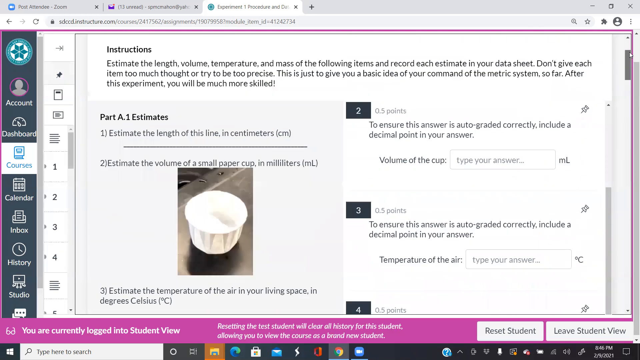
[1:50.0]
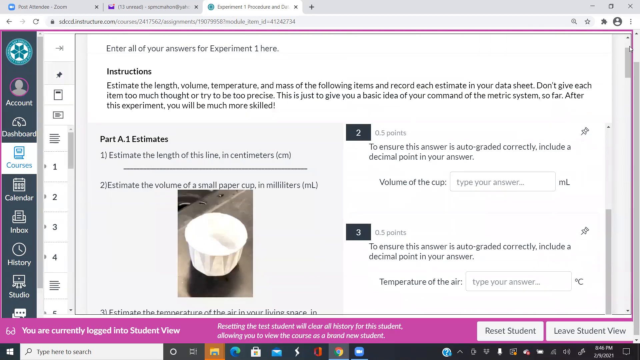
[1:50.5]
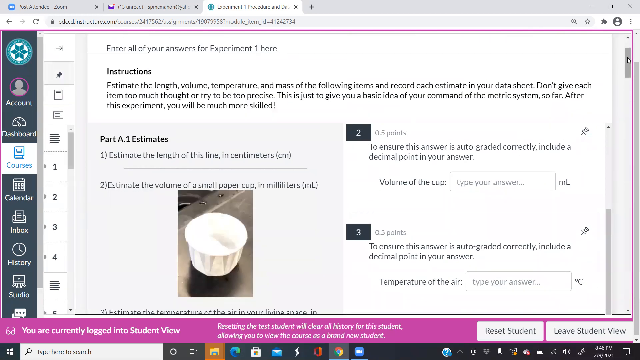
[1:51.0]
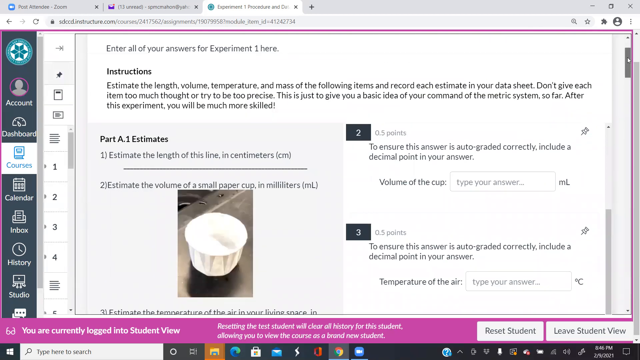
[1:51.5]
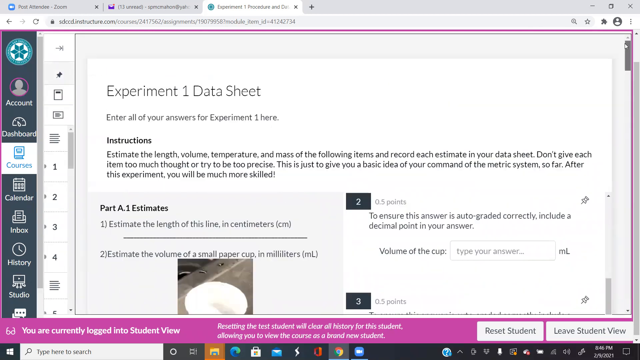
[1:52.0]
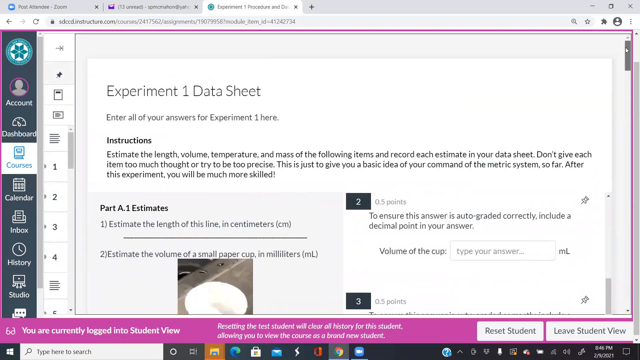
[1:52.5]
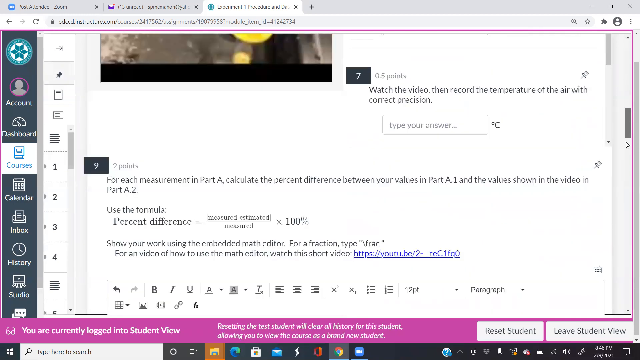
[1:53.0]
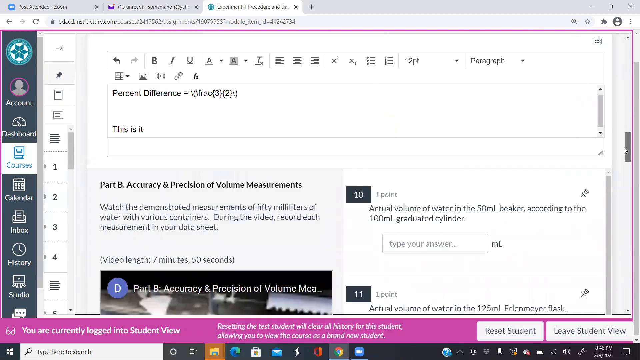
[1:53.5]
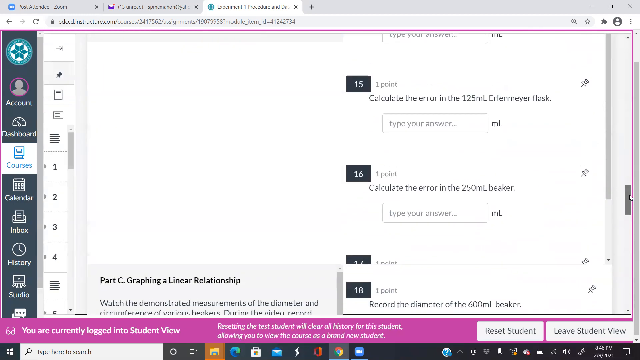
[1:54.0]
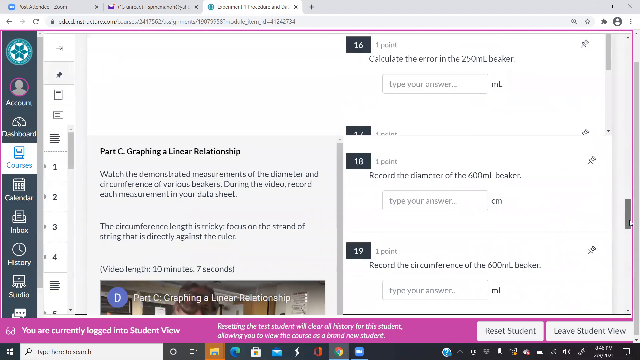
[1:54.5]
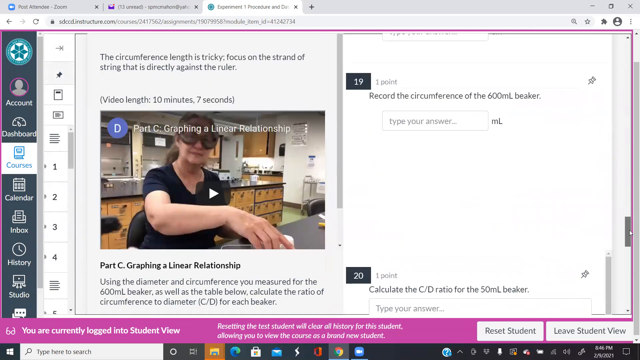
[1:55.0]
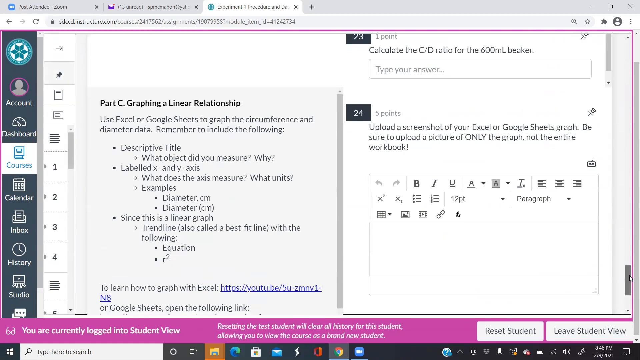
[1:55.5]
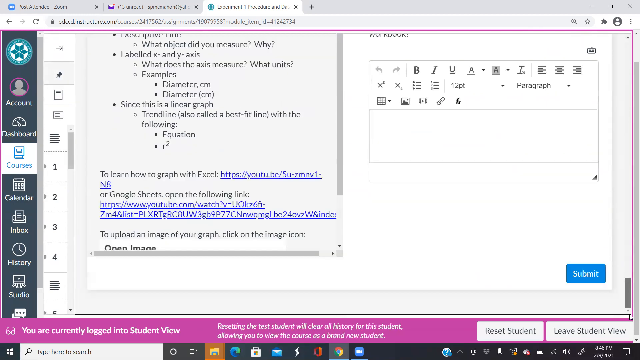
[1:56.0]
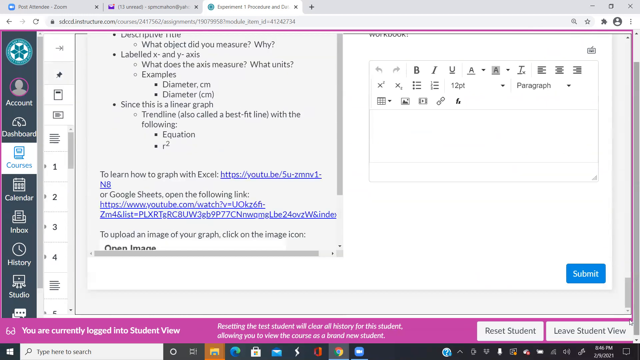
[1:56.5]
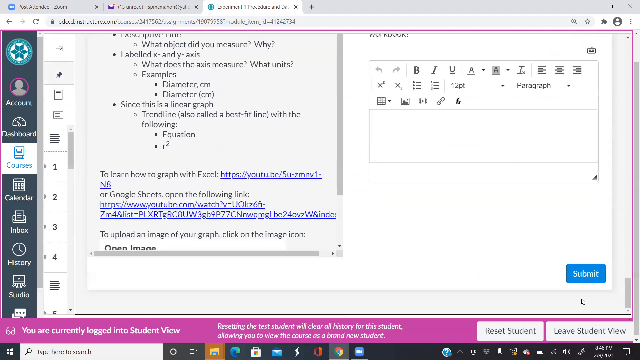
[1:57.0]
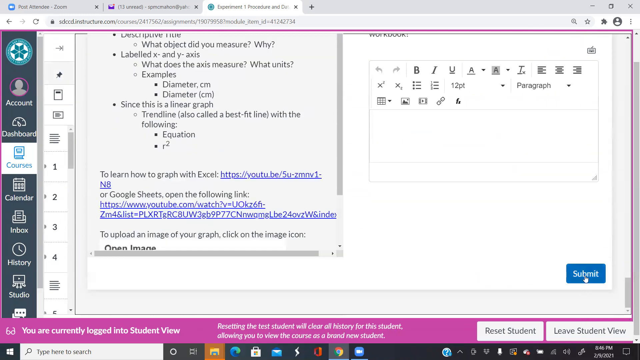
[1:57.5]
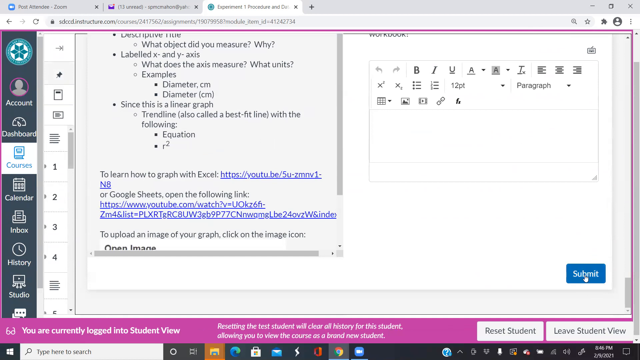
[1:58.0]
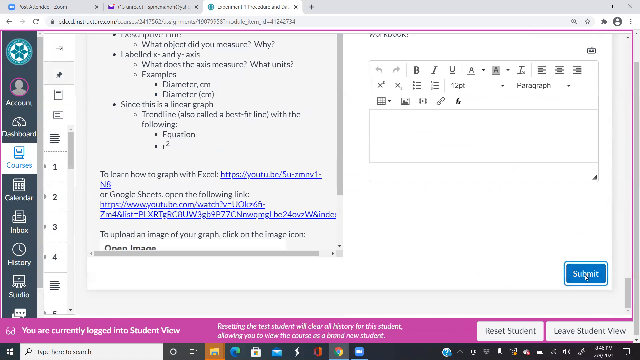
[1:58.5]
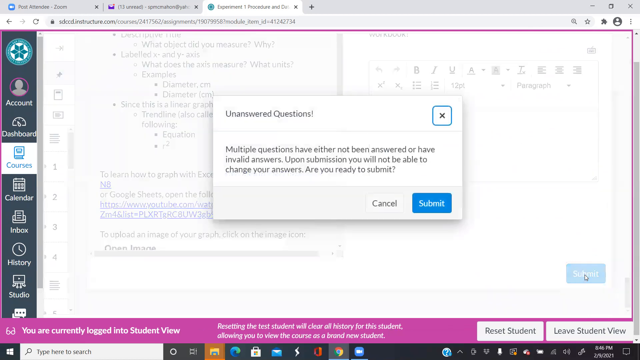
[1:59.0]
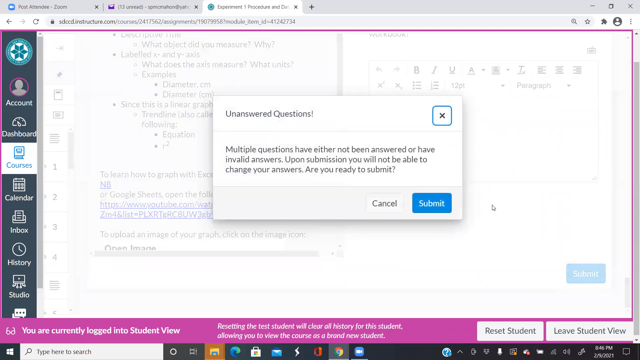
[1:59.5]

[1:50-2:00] A data sheet for experiment 1 gives instructions on the first part of the experiment, estimates. The screen is divided in two: questions about the estimates on the left and the space for typing answers on the right. The student scrolls down to a question about percent difference and clicks on the space provided to answer. They type a fraction as the answer using the MathQuill toolbar and also type "this is it". They then go back to the assignment, scroll up with the mouse, the arrow moving up and down, and scroll back down. Other questions are visible, but they do not answer them and click submit.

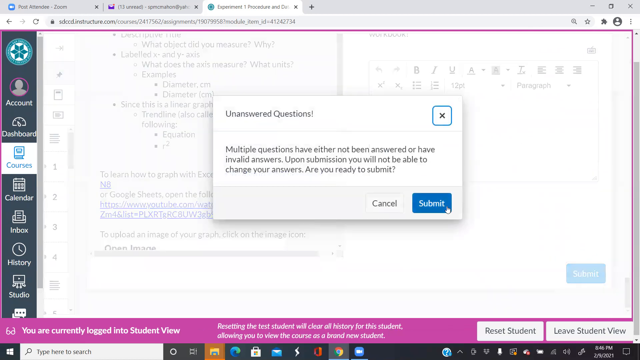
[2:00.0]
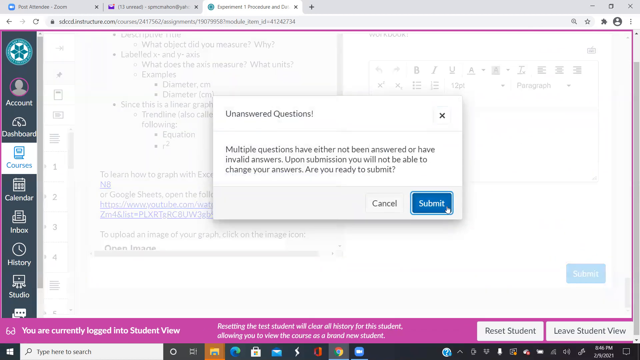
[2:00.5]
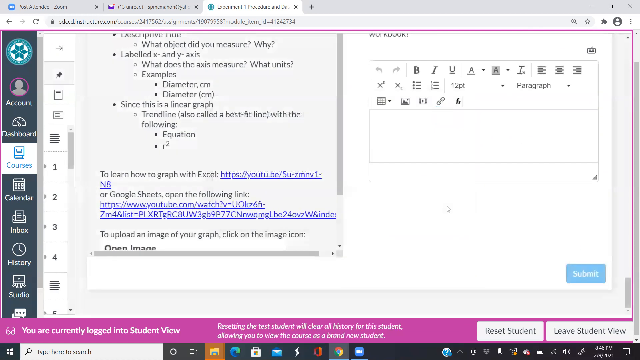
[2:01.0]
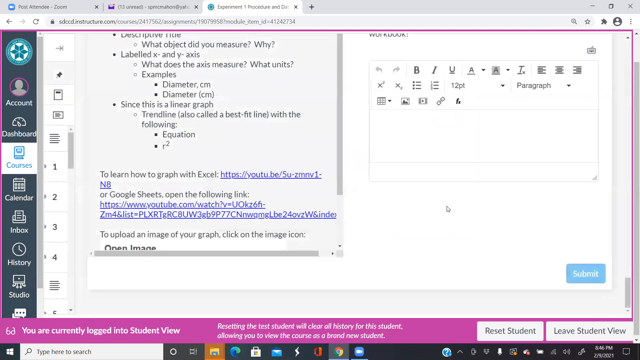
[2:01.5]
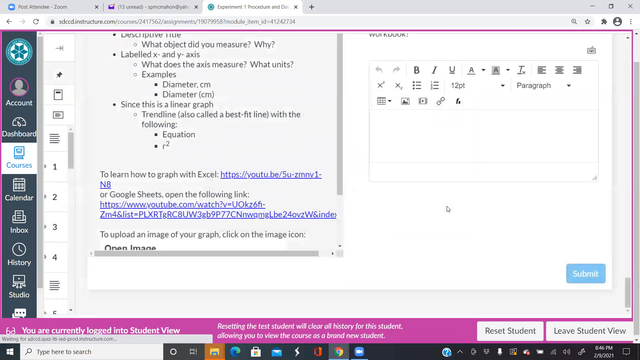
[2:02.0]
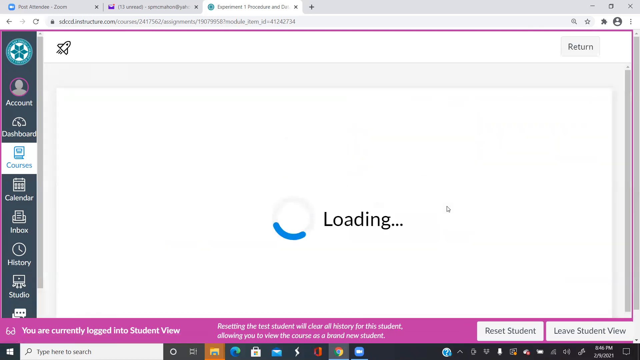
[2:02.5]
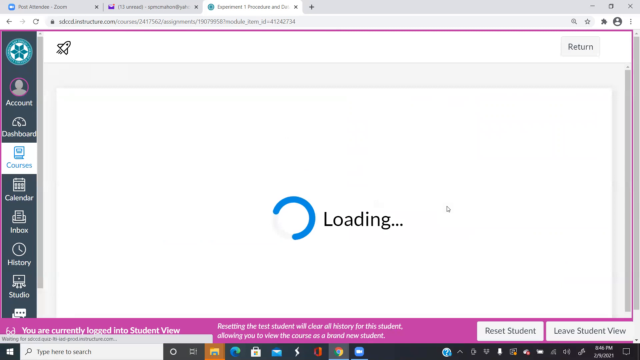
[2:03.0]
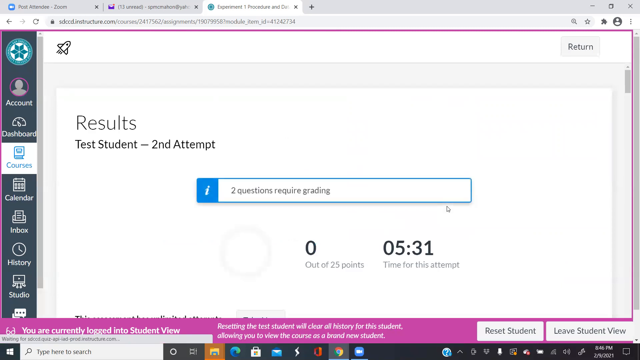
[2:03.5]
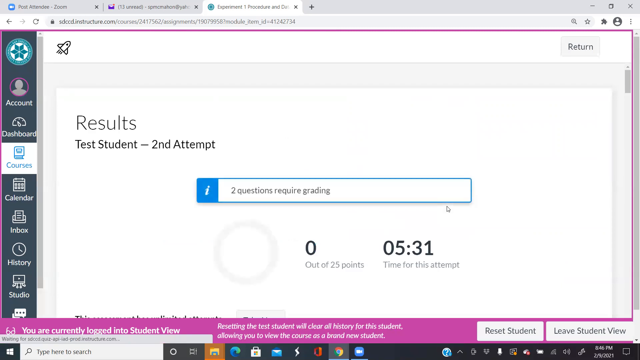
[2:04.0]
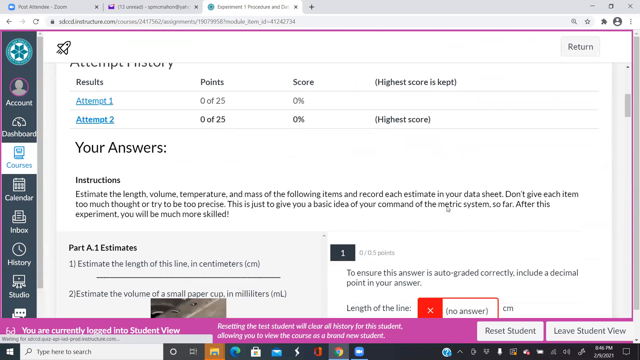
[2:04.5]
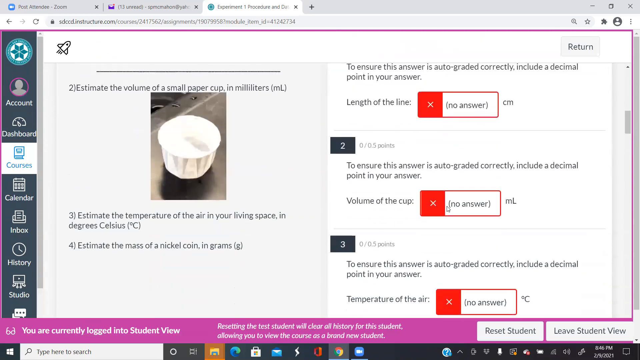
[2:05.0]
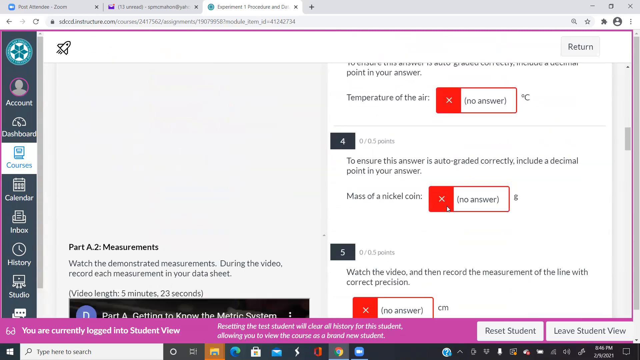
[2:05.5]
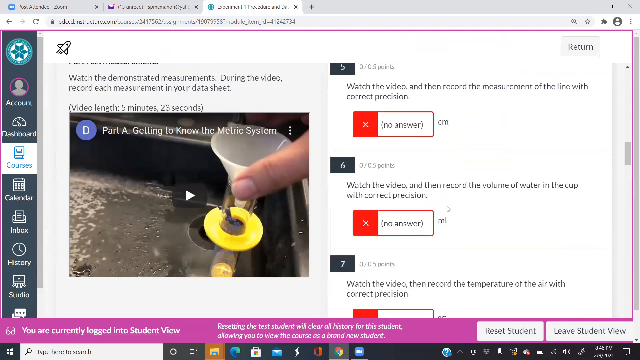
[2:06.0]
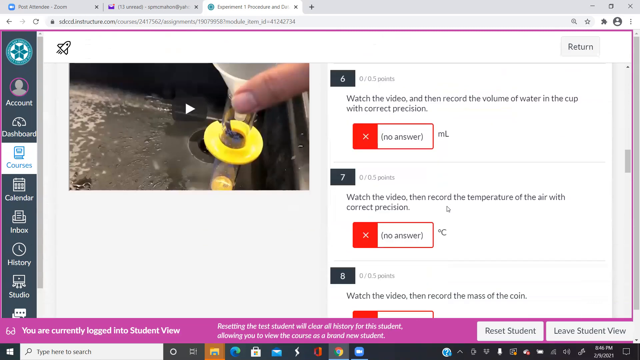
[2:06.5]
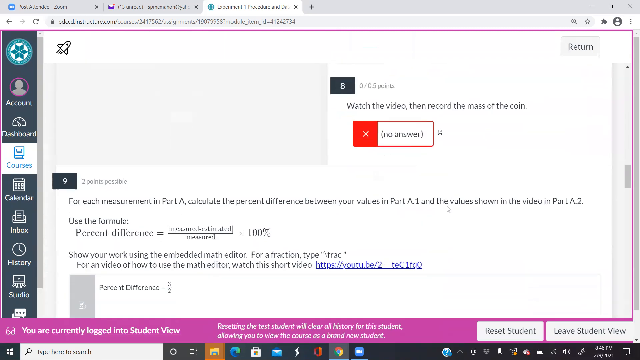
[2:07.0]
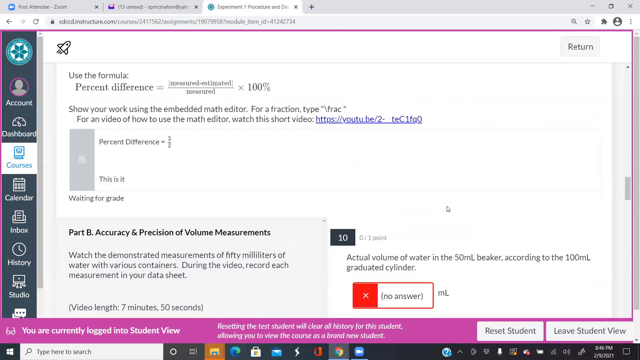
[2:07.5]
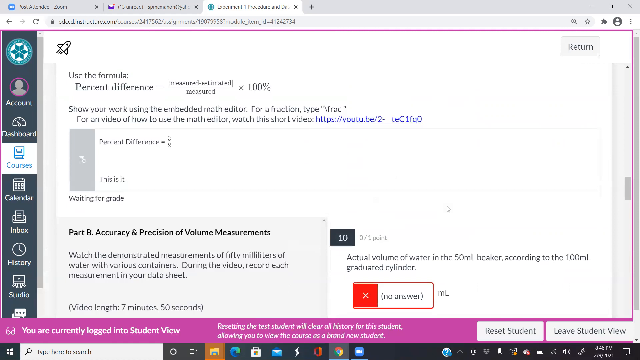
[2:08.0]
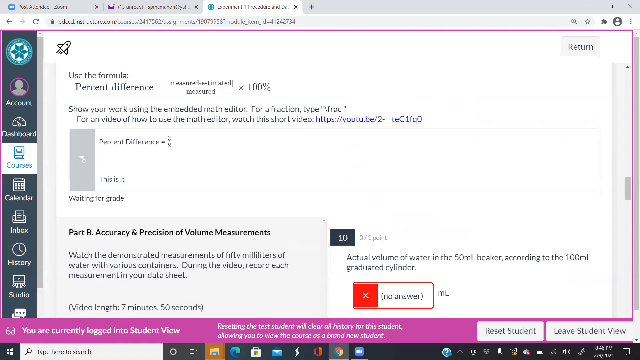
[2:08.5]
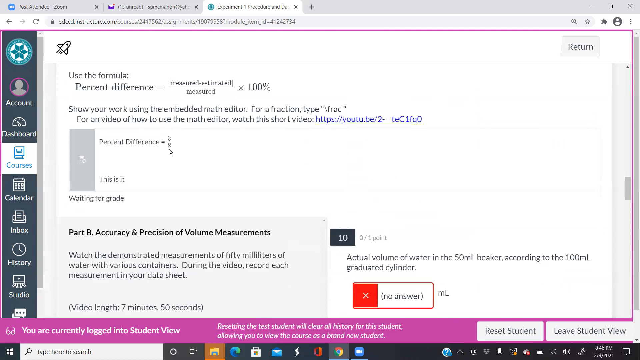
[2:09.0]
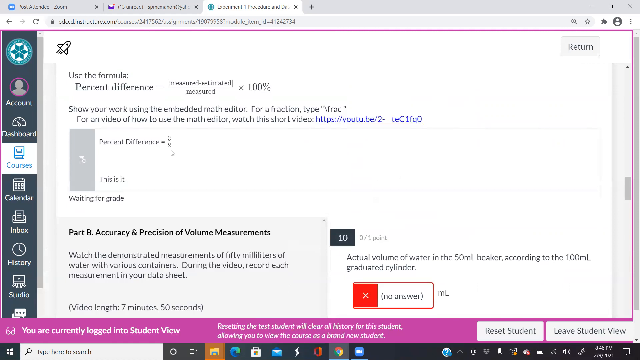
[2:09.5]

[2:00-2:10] What looks like a student's assignment is on screen, with "Experiment 1, Data Sheet" written on it. On the far left are tabs that say Account, Dashboard, Courses, Inbox, History and Studio. The student is under the courses tab, viewing in student view. Part A of the questions is called "estimates". The student scrolls down using the mouse arrow to a question about percent difference, clicks on a blank space, types a fraction as the answer and also types "this is it". They then scroll up and down again and eventually click submit without answering all of the questions.